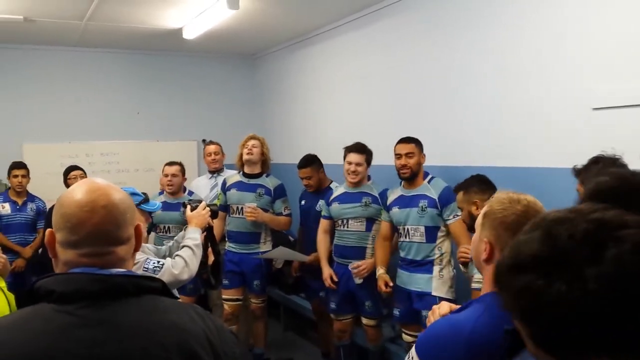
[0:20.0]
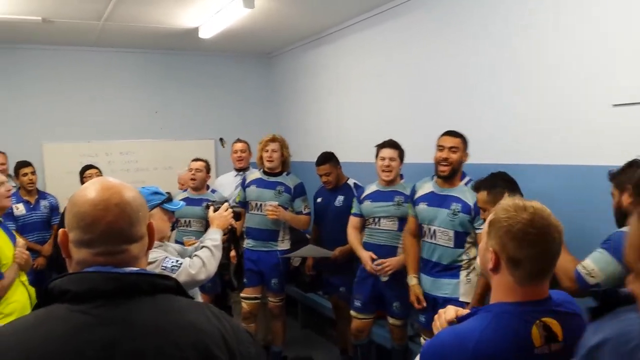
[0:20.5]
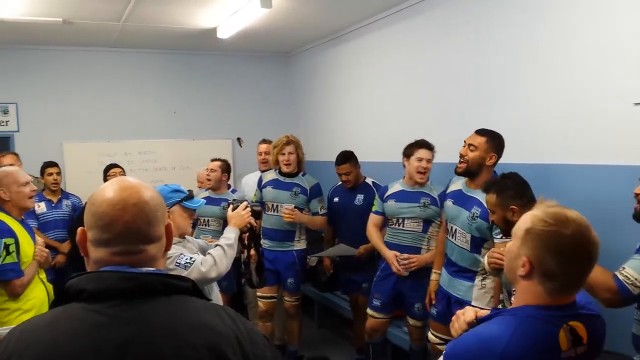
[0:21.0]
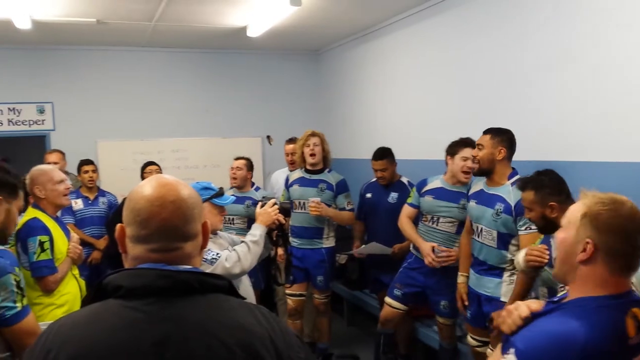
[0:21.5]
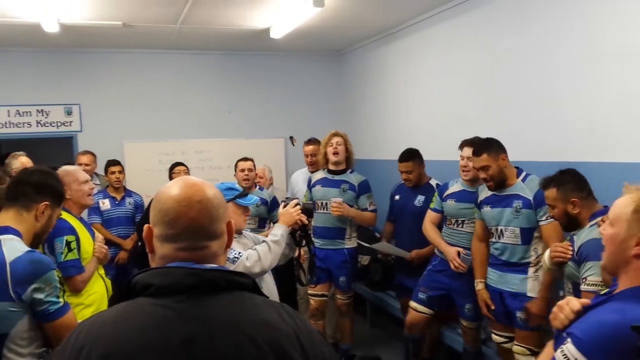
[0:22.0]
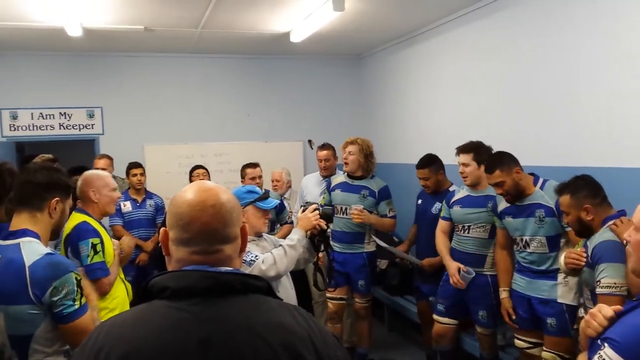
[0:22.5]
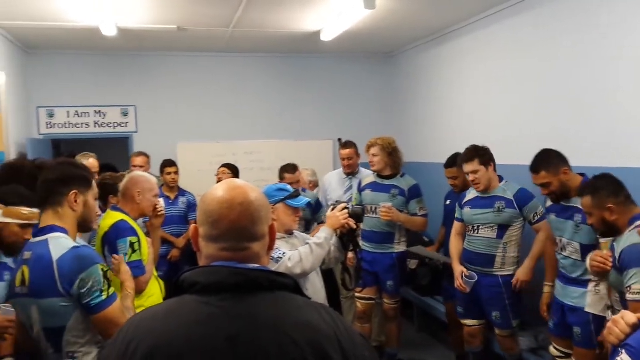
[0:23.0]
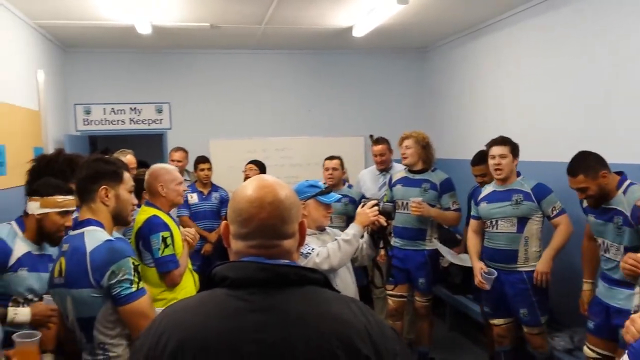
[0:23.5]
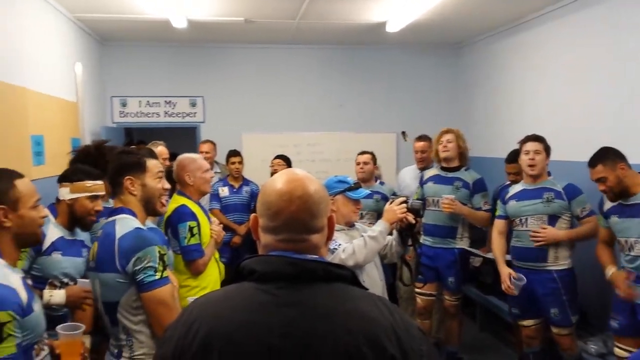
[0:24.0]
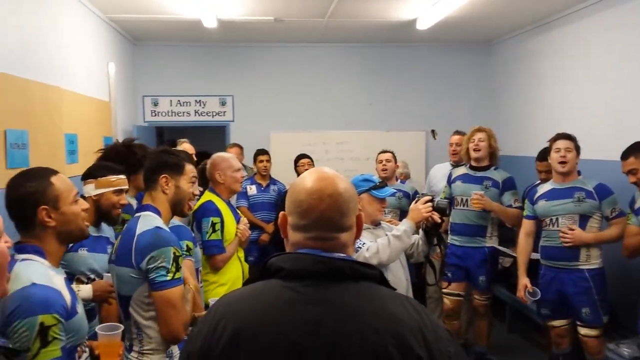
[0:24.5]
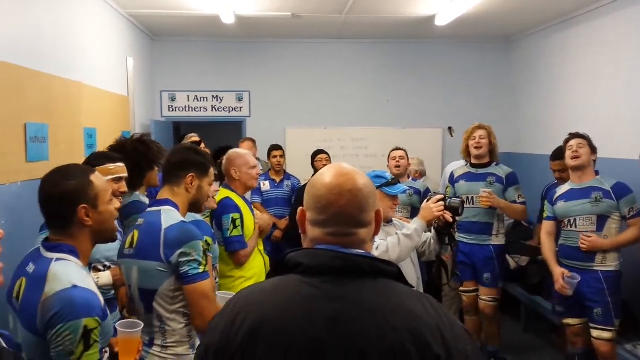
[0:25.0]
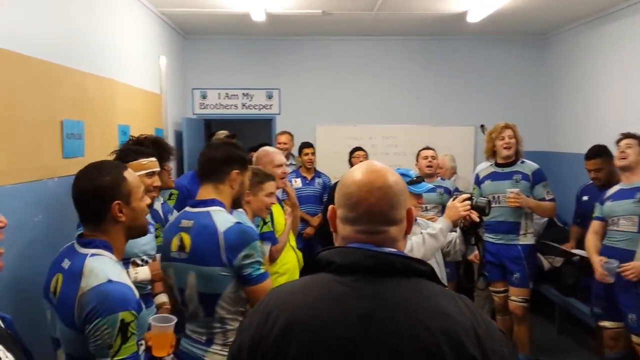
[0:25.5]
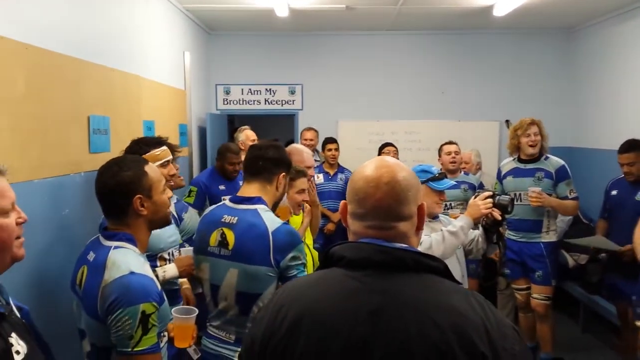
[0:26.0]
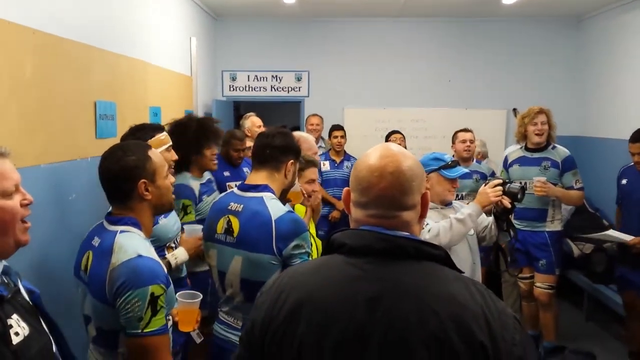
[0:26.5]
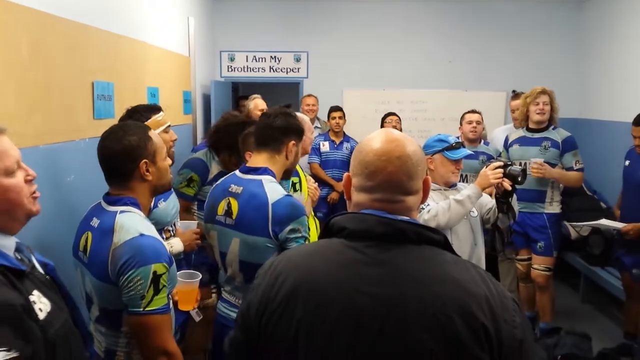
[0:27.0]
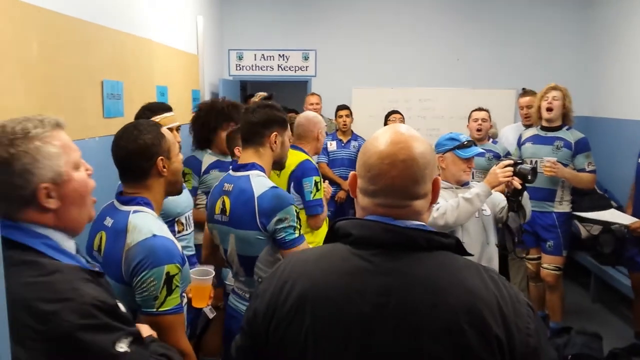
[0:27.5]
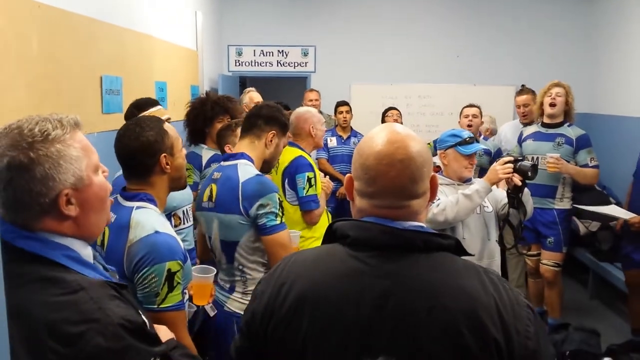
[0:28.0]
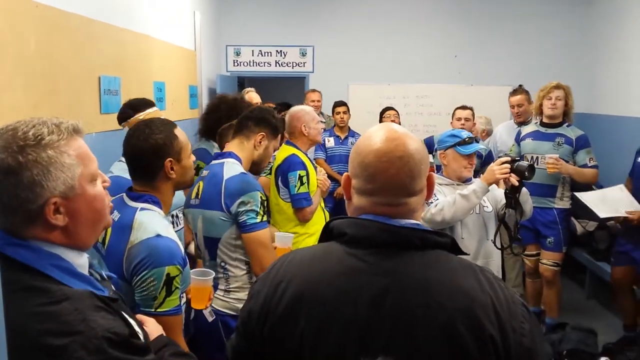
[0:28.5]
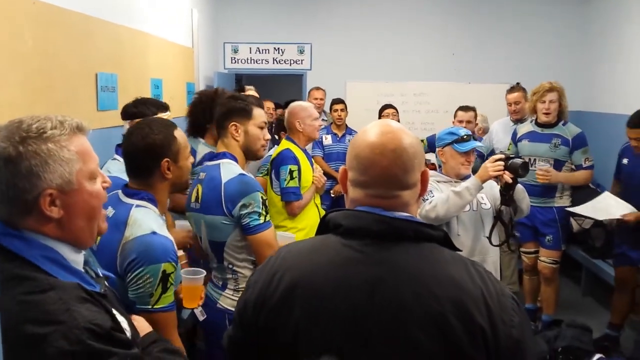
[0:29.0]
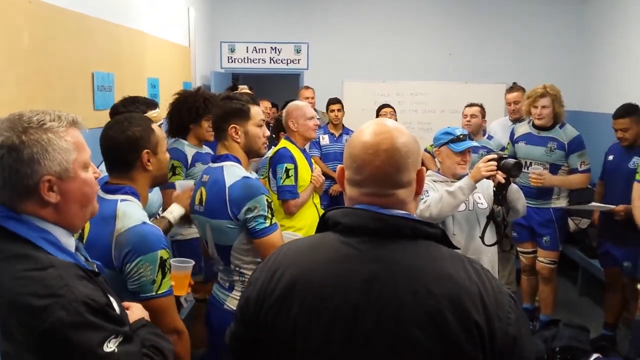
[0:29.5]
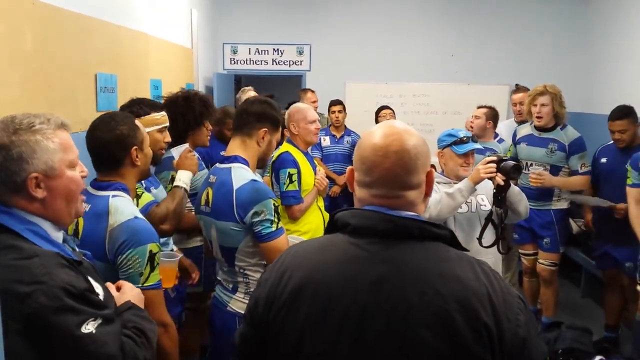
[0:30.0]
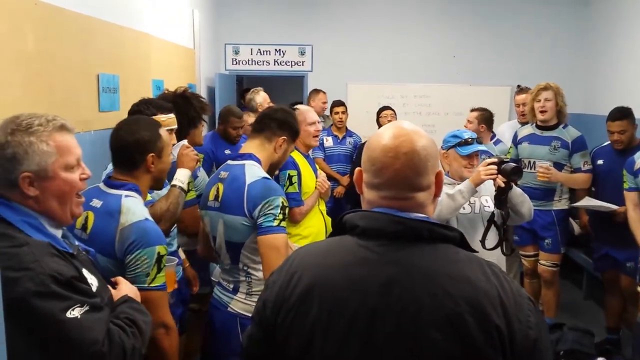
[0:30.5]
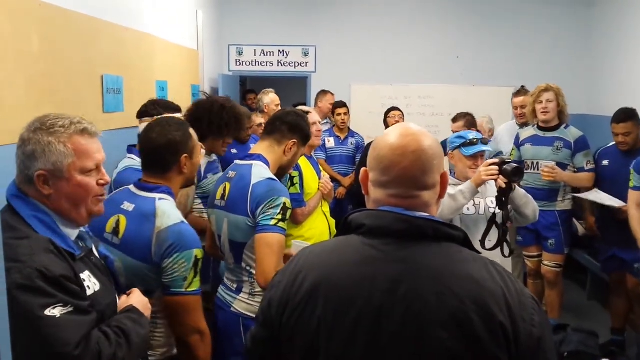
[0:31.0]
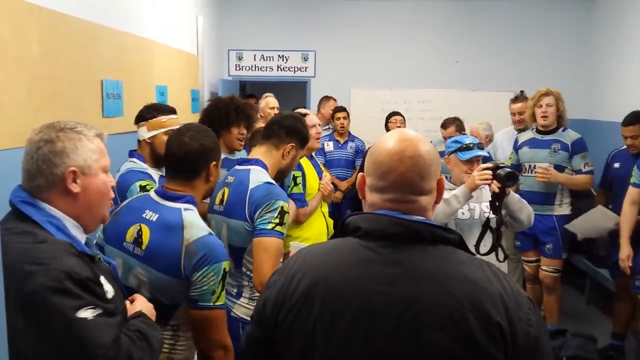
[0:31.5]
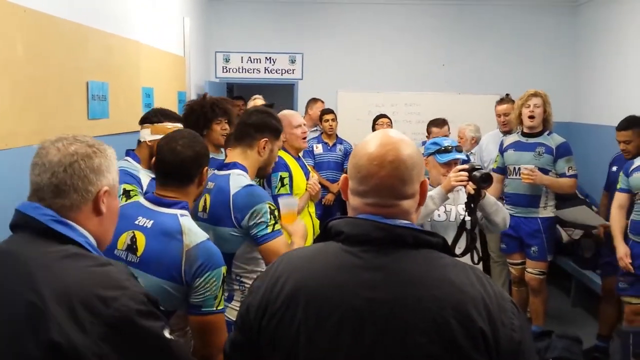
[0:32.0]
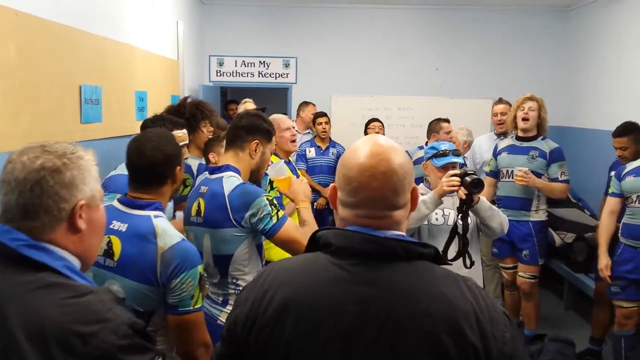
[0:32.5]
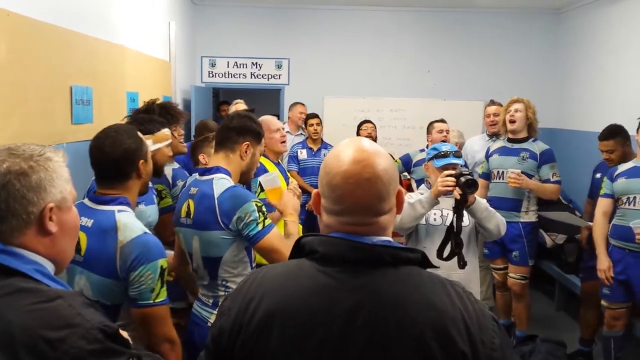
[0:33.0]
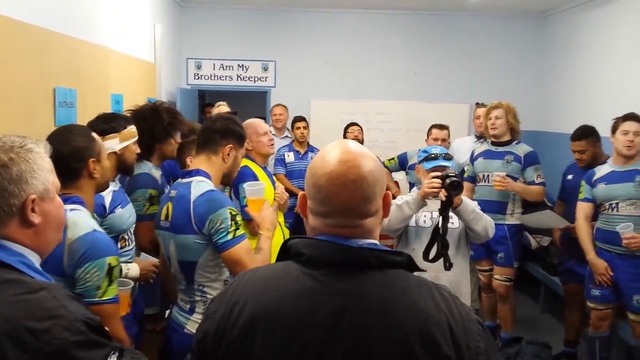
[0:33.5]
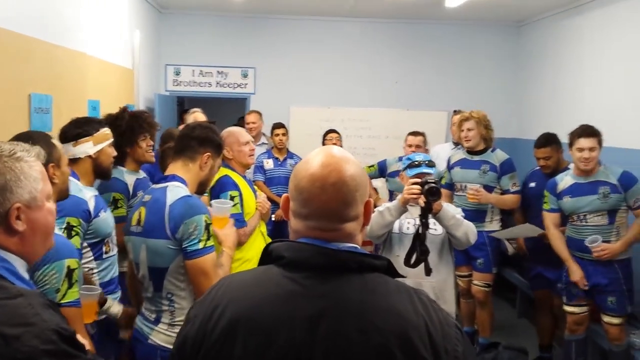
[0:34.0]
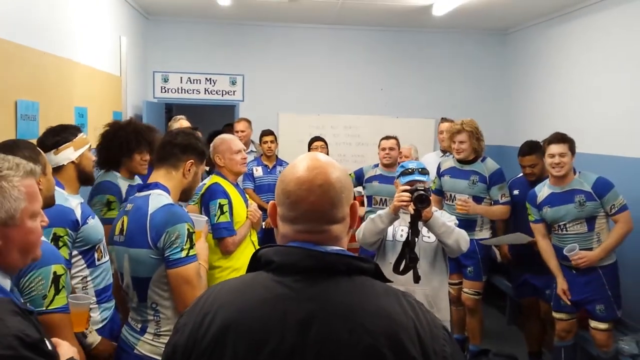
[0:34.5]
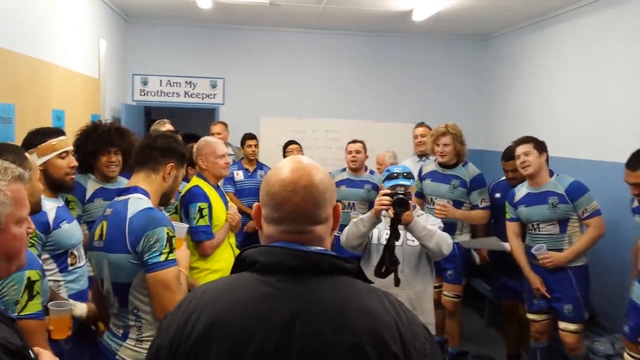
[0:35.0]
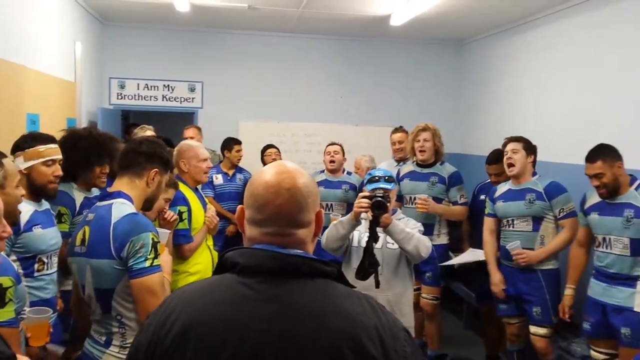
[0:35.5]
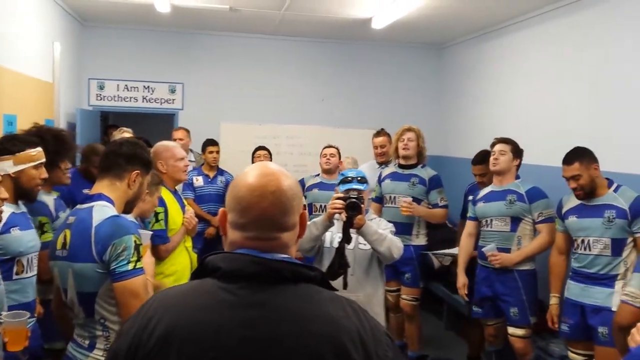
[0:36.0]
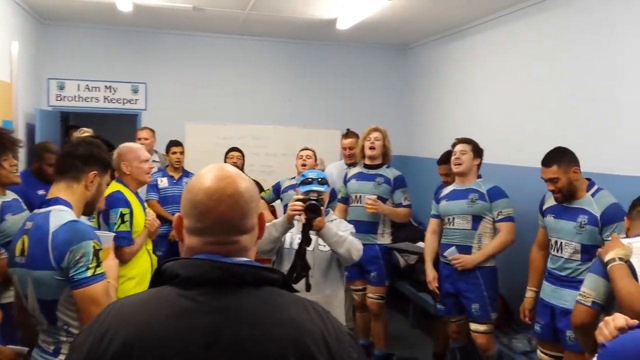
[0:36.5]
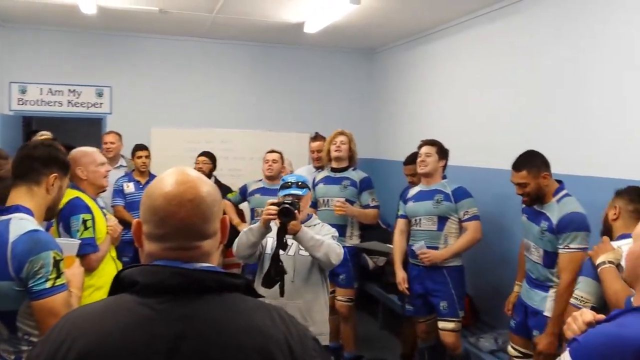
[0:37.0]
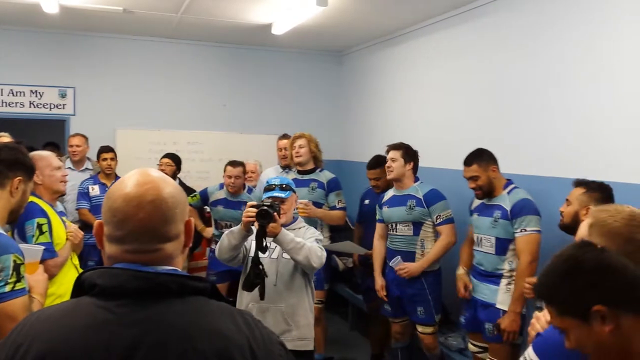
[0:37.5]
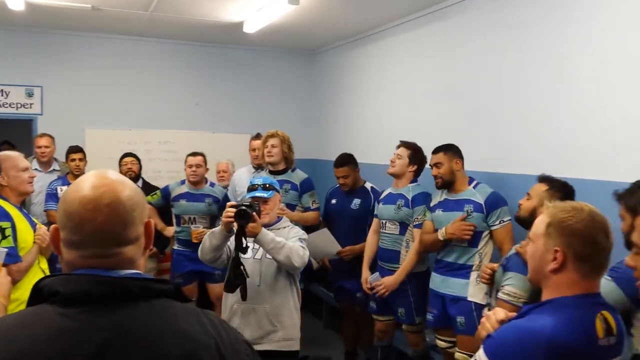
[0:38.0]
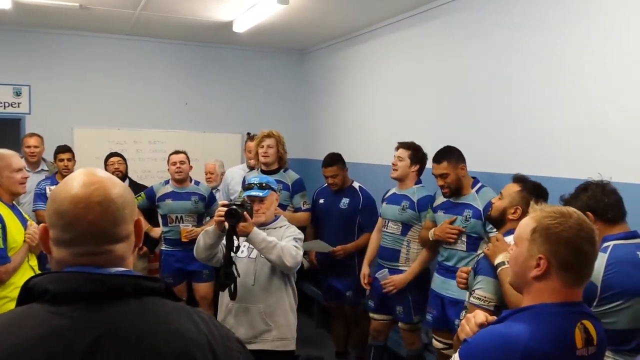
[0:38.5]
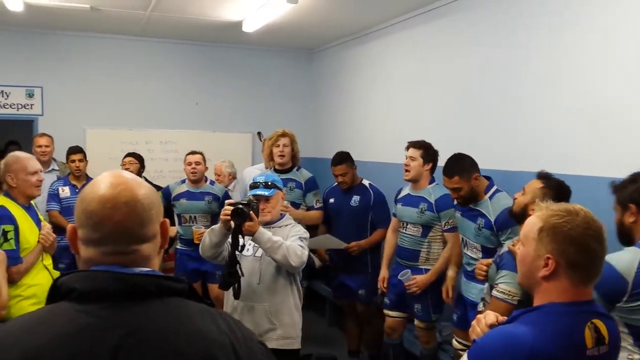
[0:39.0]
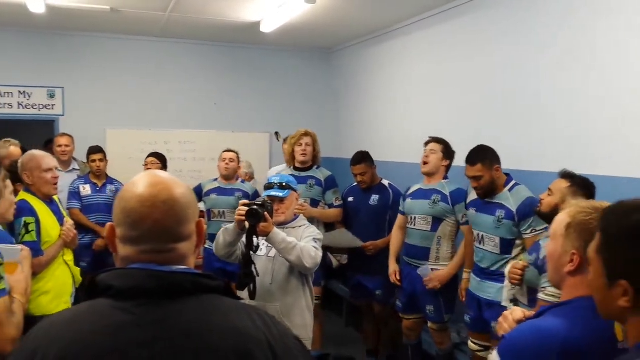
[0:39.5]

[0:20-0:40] The camera pans from right to left as the players keep singing, belting out a tune and looking very excited and happy. One player in the back with ginger hair holds a cup of water. An older man in a gray hoodie holds a DSLR camera and is taking either video or pictures; he looks very happy, with a smirk on his face. The players are all tall, and some of the staff sing along with them. An older man who is possibly the coach or a referee stands out in a bright neon yellow vest, with his hands over his chest. Another player on the right holds up a clear cup, while the rest are huddled together singing or chanting.